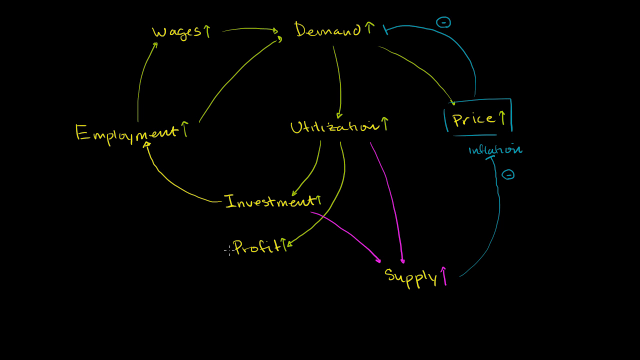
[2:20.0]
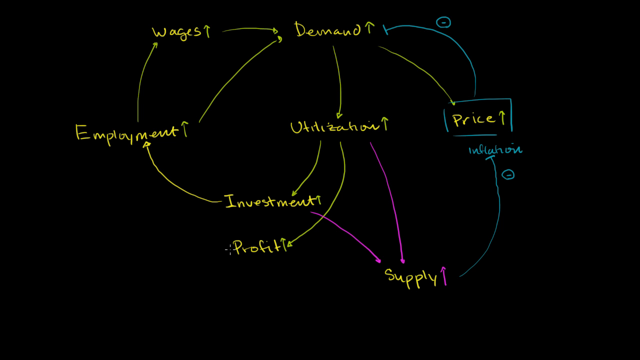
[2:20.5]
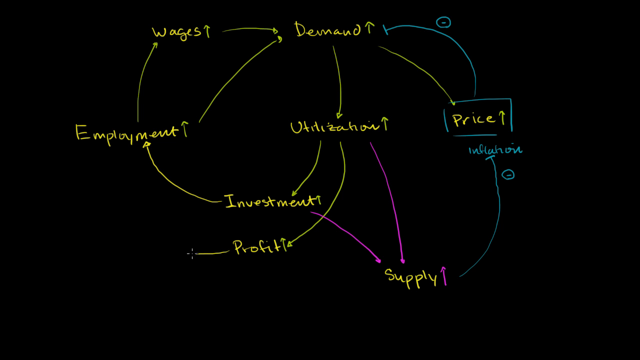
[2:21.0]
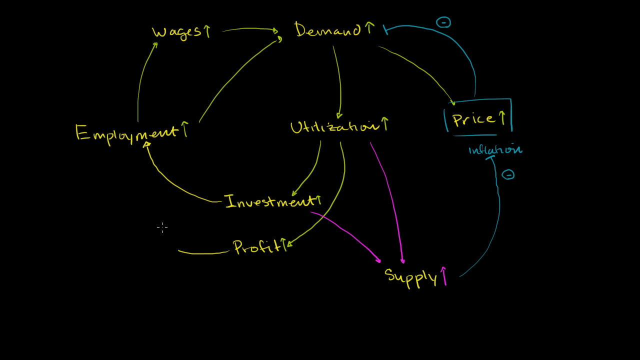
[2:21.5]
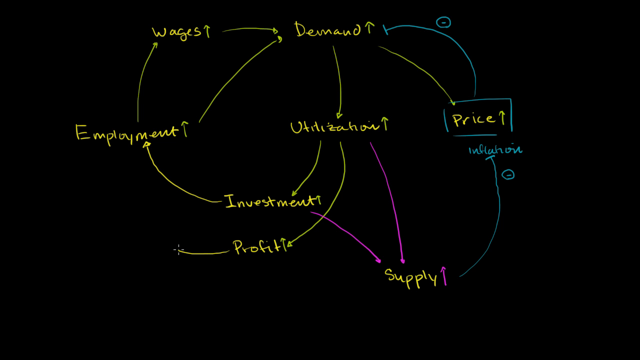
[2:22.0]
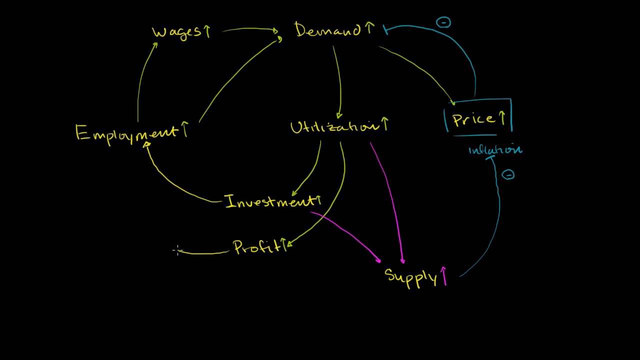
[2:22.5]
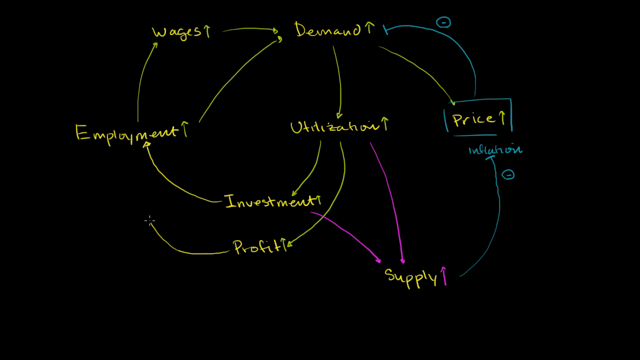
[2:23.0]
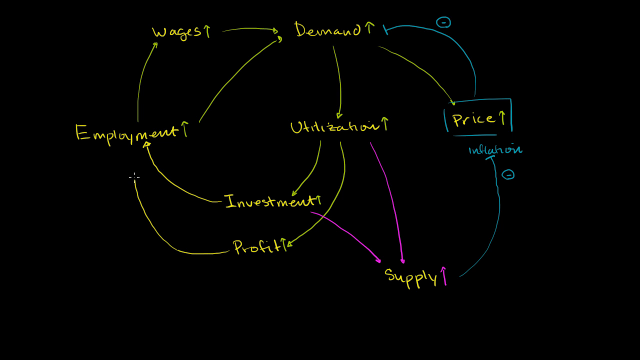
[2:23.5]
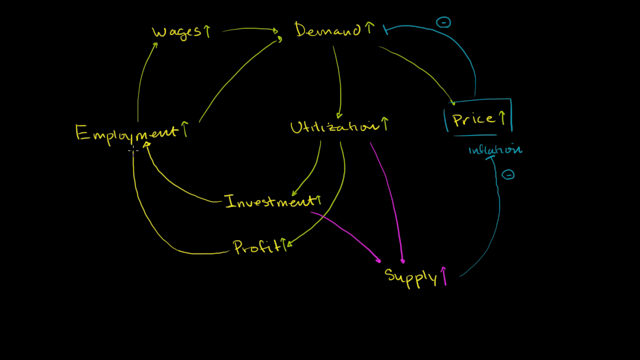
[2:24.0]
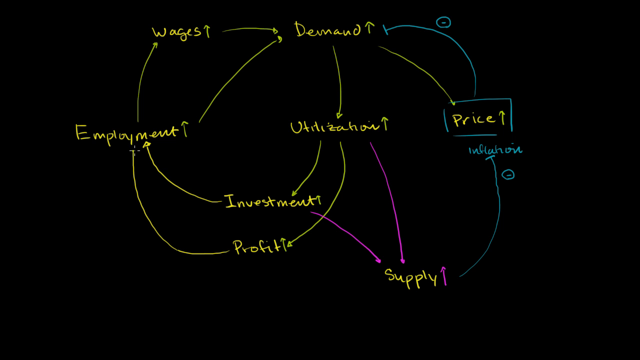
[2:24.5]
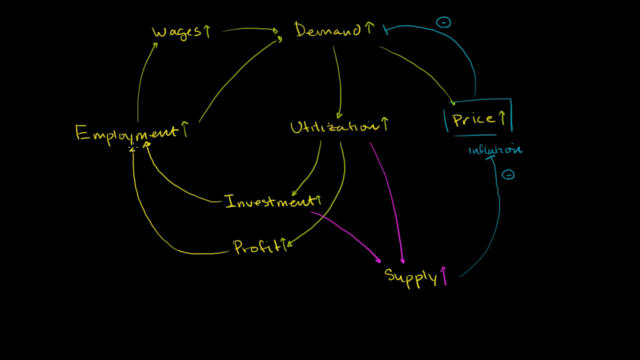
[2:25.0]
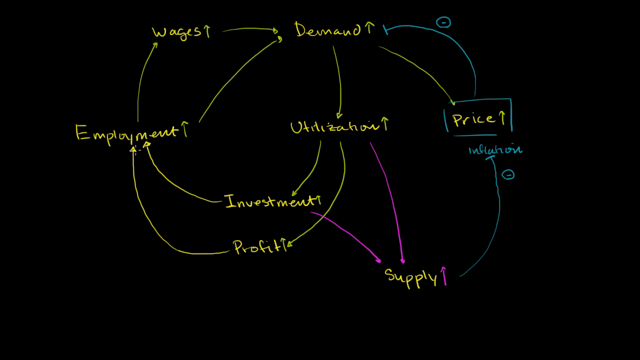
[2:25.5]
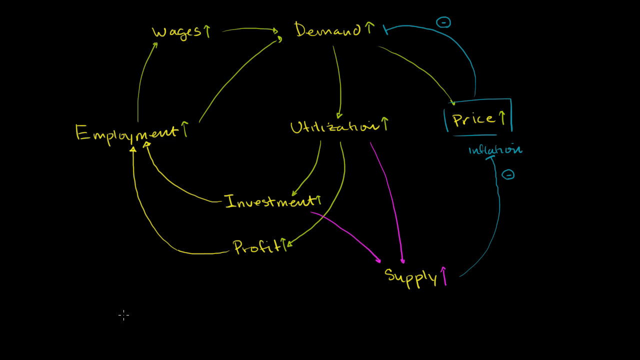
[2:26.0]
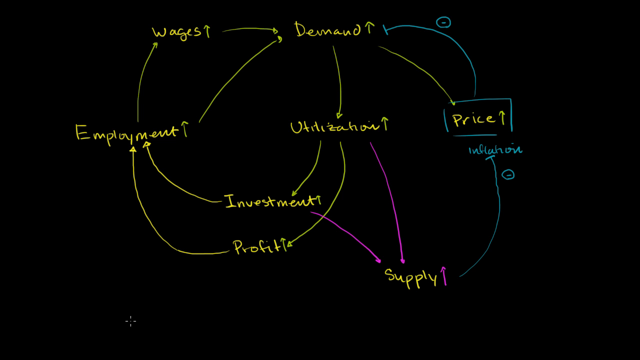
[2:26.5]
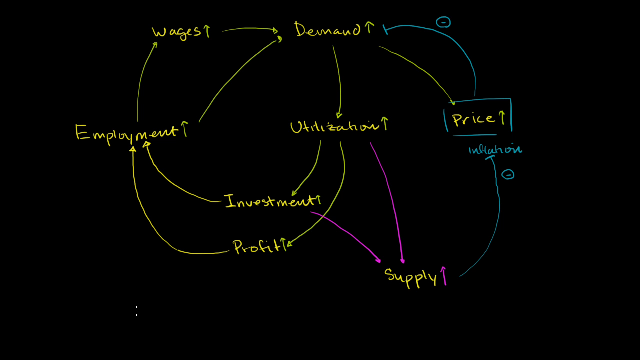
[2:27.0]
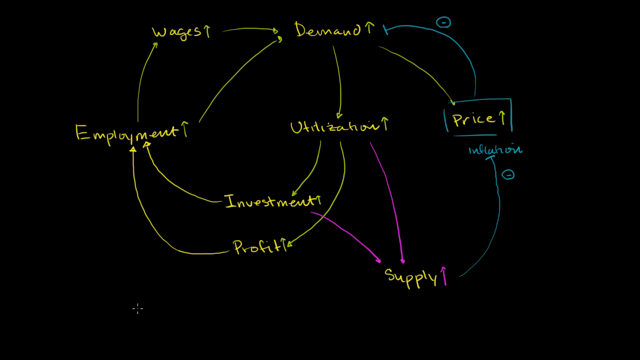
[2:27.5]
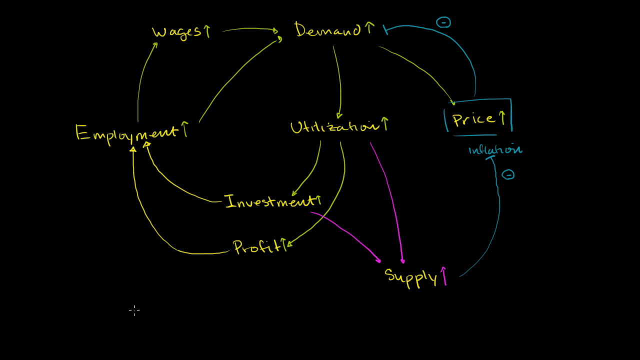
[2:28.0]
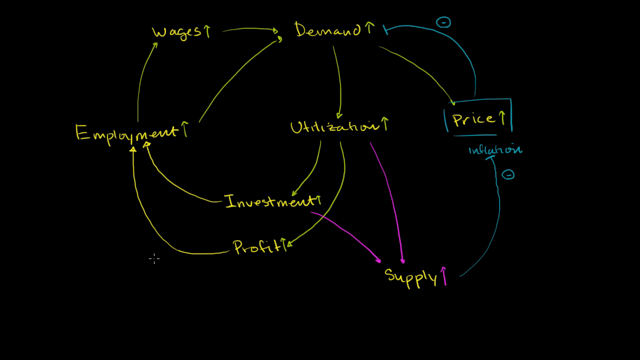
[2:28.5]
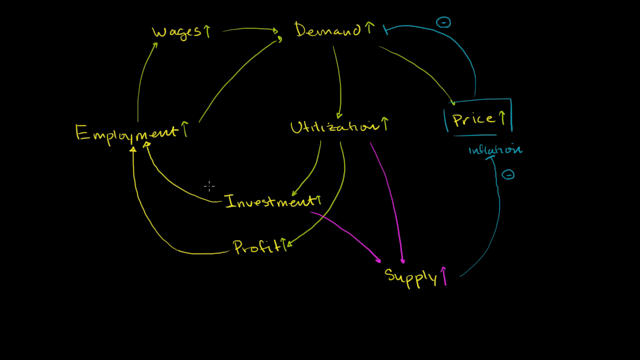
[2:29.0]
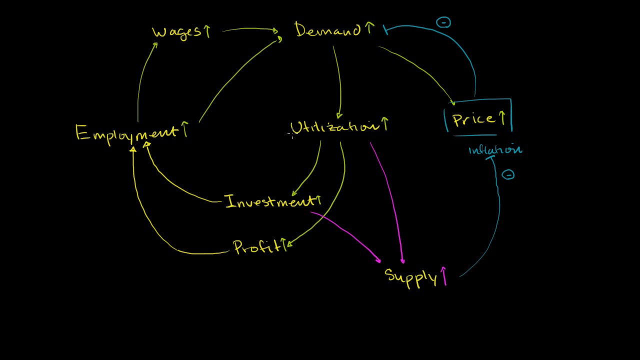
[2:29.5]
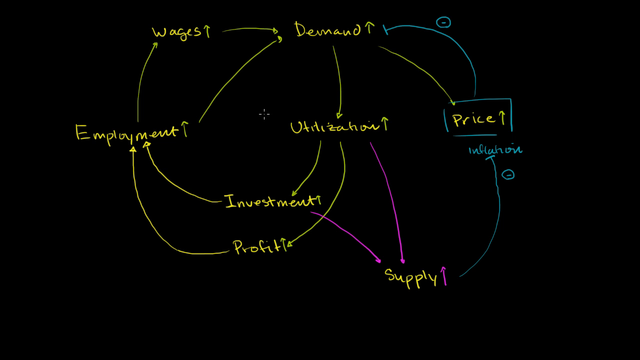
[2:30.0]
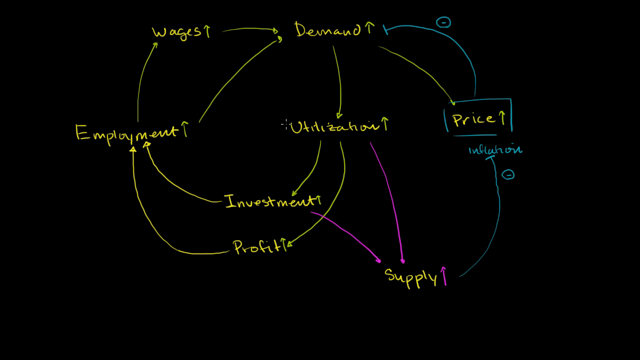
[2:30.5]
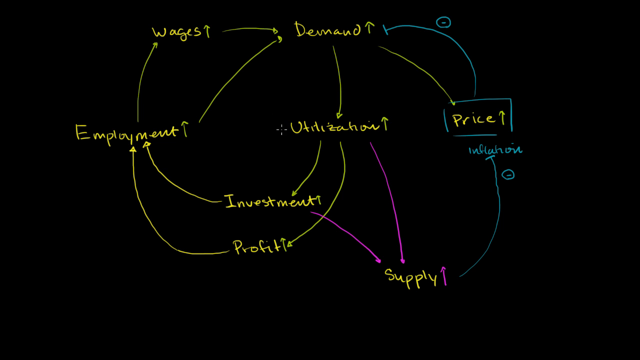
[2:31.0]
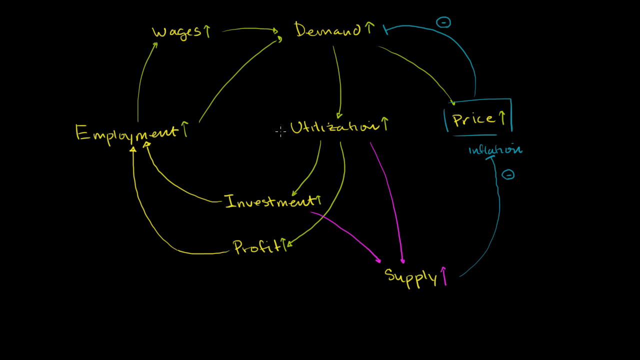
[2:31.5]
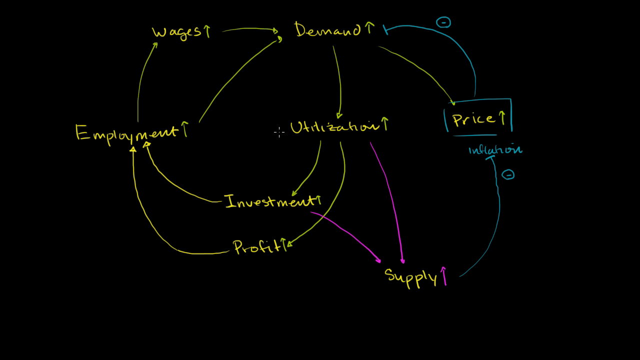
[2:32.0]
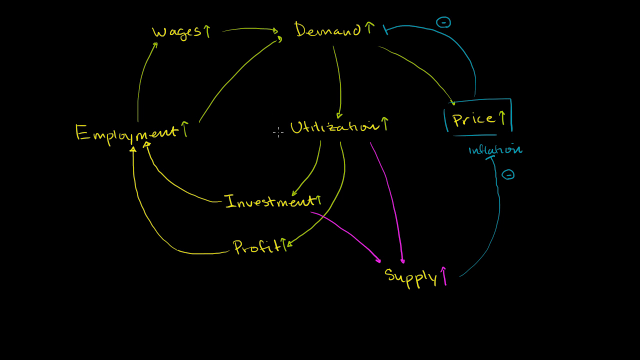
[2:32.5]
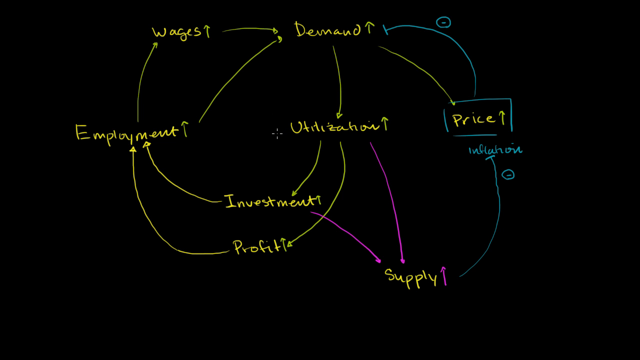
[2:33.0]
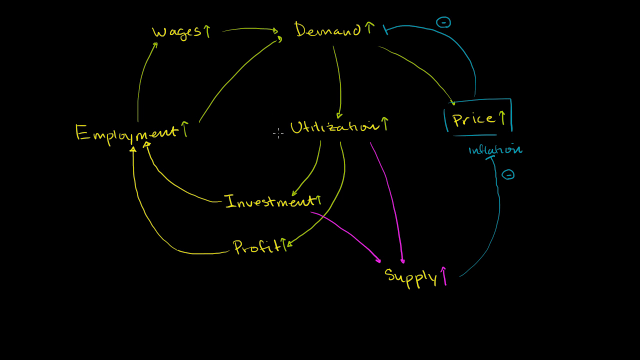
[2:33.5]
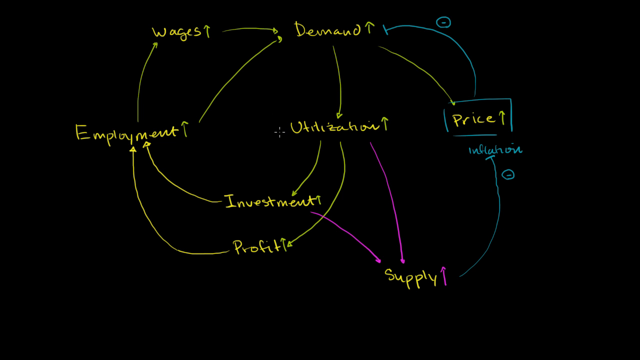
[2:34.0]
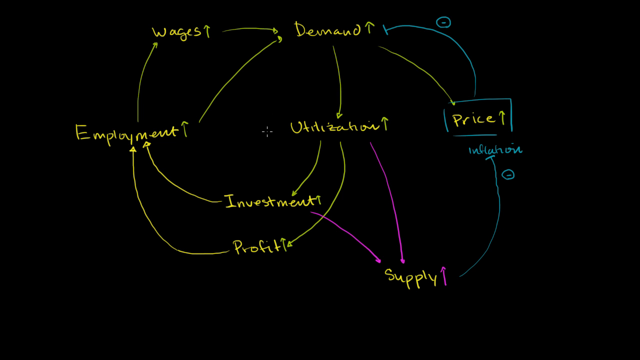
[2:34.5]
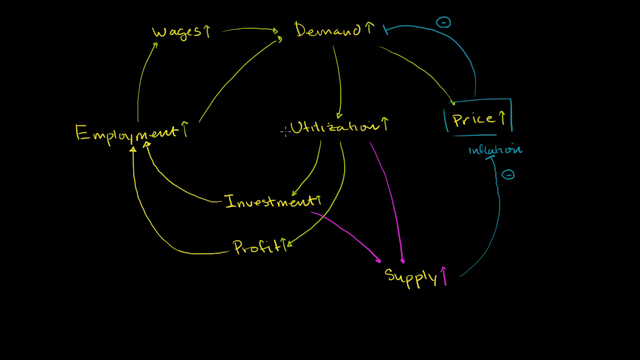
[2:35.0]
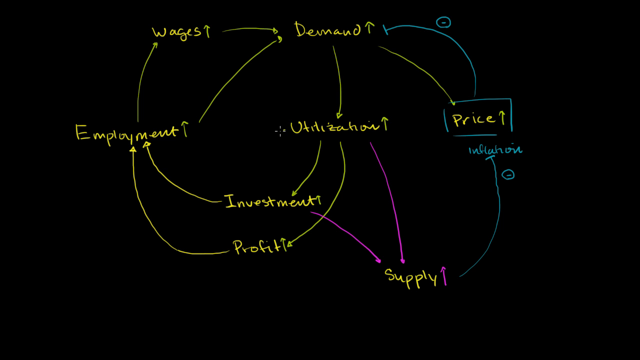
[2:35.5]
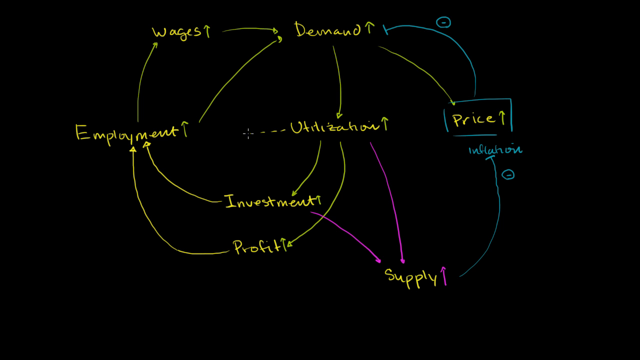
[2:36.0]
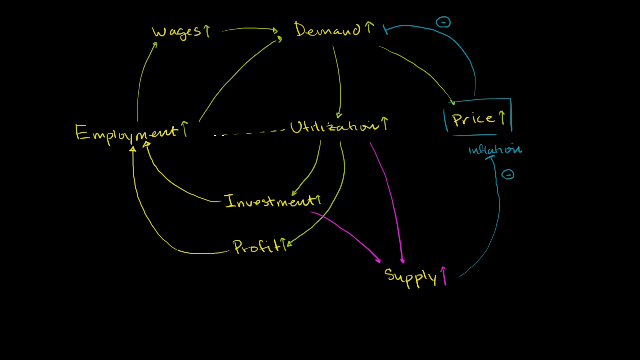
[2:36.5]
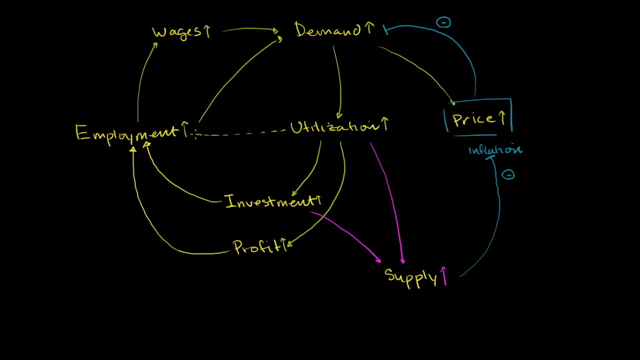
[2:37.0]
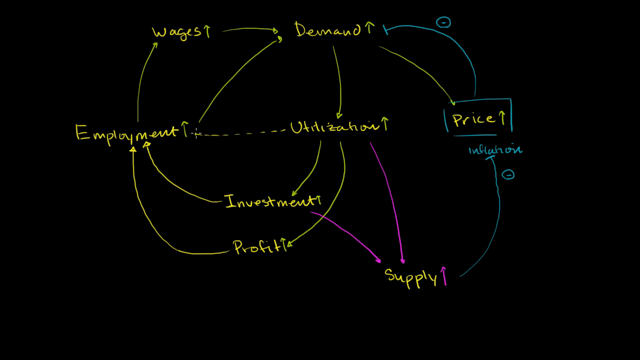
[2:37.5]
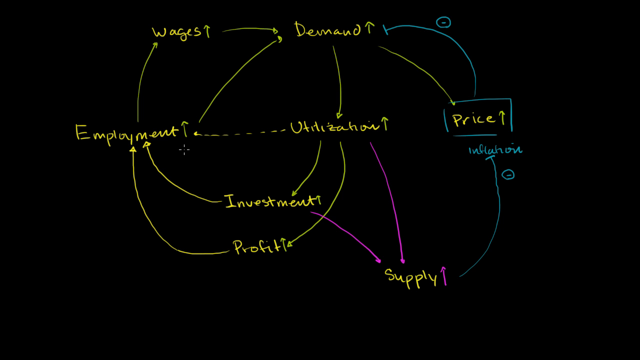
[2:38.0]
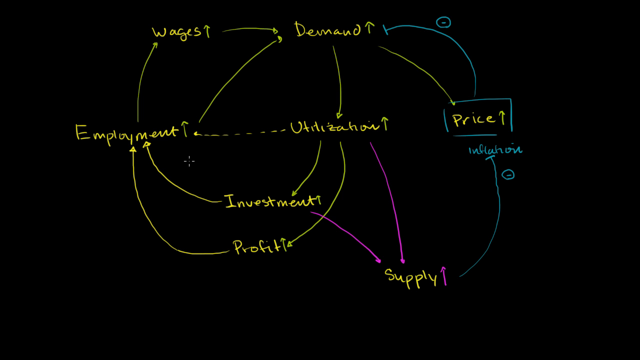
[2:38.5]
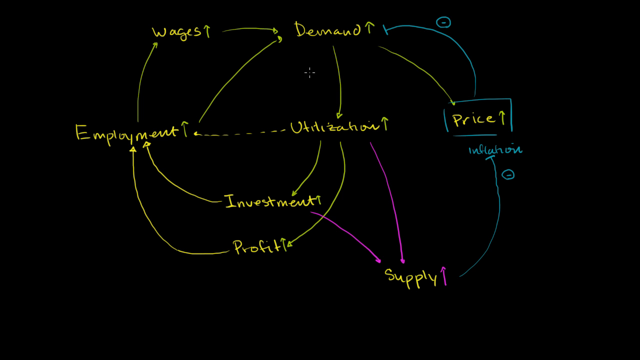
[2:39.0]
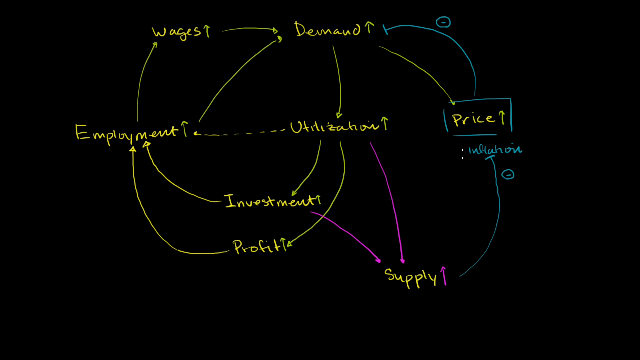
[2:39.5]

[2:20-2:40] The black screen shows multiple words: "Wages" at the top, "Demand" also in yellow at the top middle, "Employment" on the left, "Utilization" in the middle and "Price" on the right below them, then "Investment," "Profit" below it, and "Supply" in yellow at the bottom toward the right. Multiple arrows point in different directions: "Employment" has arrows up to "Wages" and "Demand," "Wages" has an arrow to "Demand," and "Demand" has arrows to "Utilization" and, in yellow, down to "Price." "Utilization" has yellow arrows to "Investment" and "Profit" and a purple arrow to "Supply." "Investment" has an arrow up to "Employment" and a purple arrow down to "Supply." "Price" has a blue box around it with "Inflation" written right below, a blue line from "Price" to "Demand" with a circled negative symbol, and a blue line from "Supply" up to "Price" with a circled negative. Then "Profit" gets an arrow pointing up to "Employment," and a dotted line is drawn from "Utilization" to "Employment."